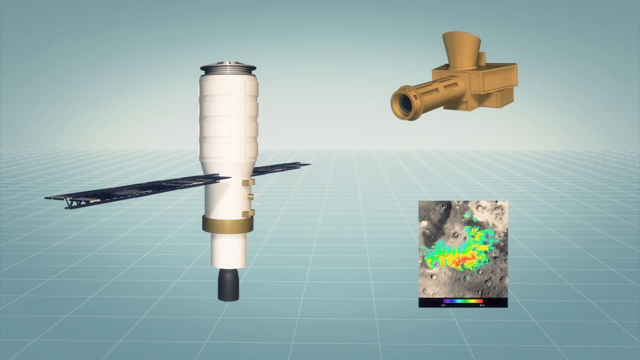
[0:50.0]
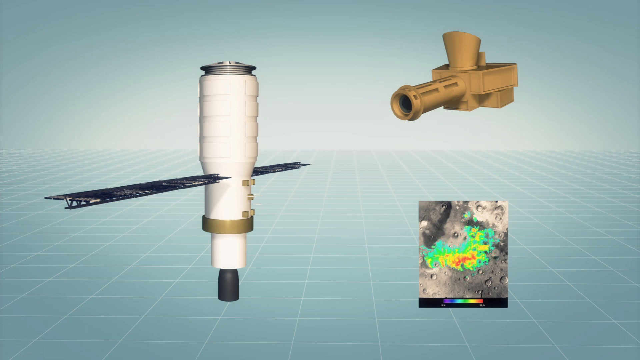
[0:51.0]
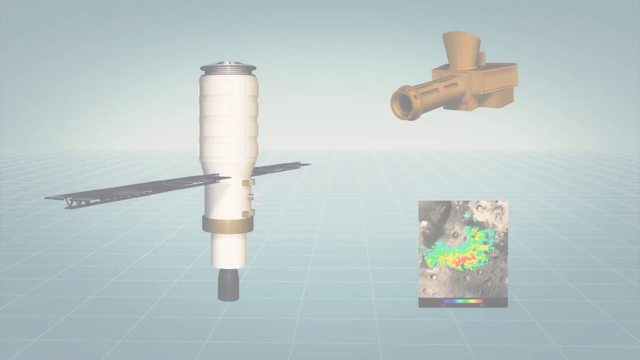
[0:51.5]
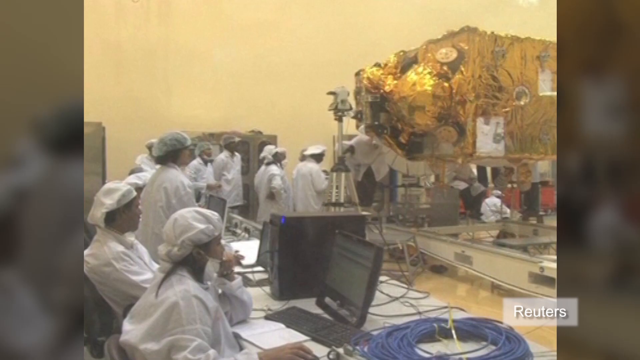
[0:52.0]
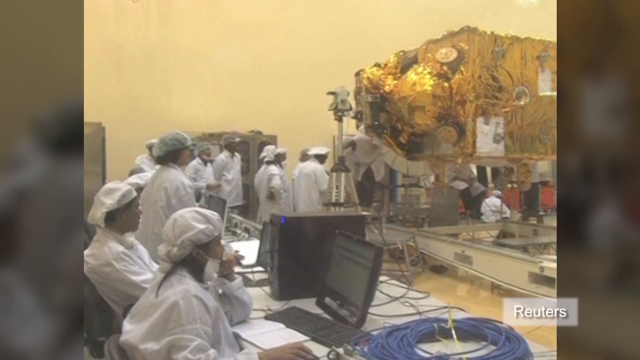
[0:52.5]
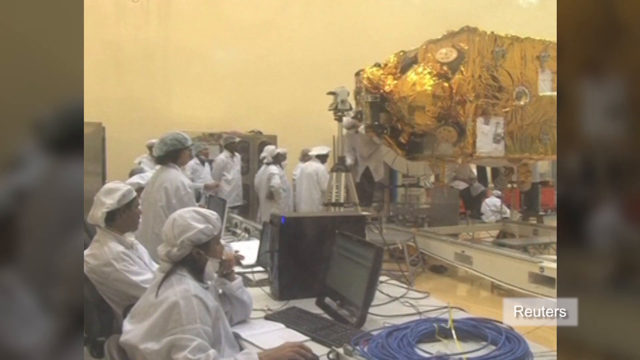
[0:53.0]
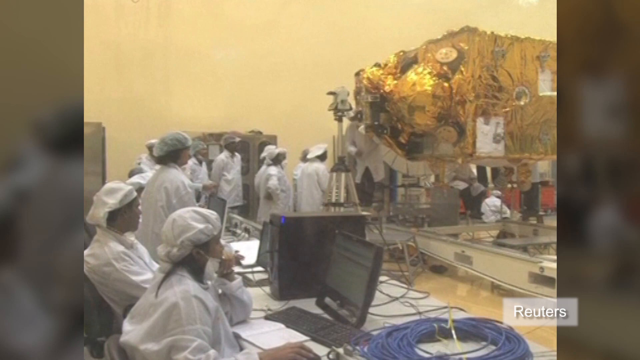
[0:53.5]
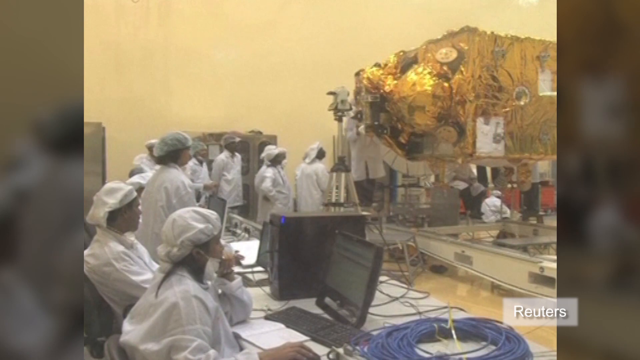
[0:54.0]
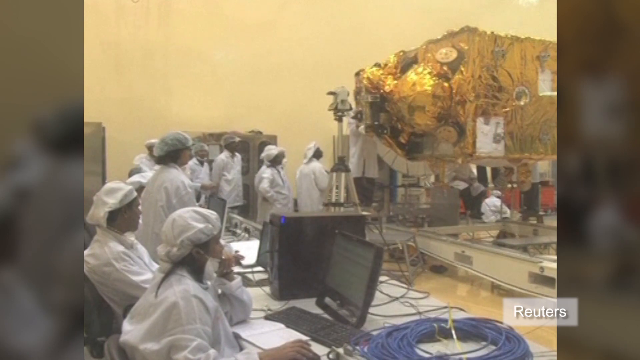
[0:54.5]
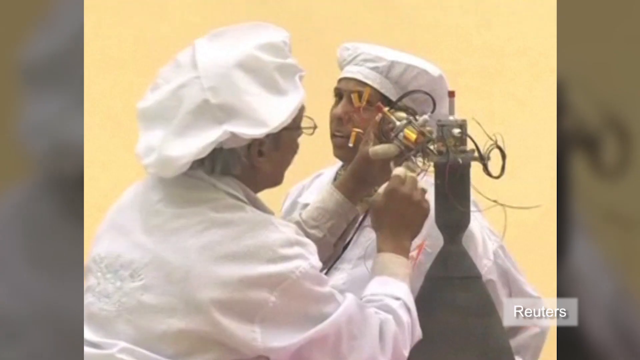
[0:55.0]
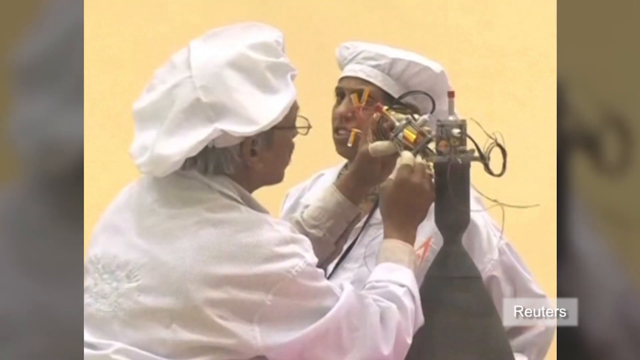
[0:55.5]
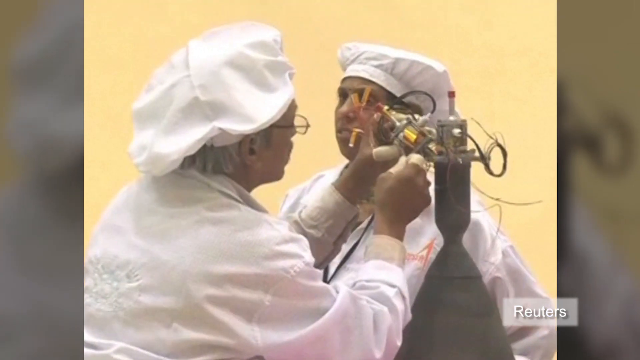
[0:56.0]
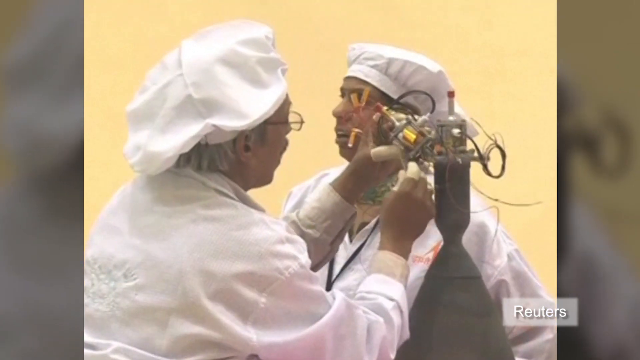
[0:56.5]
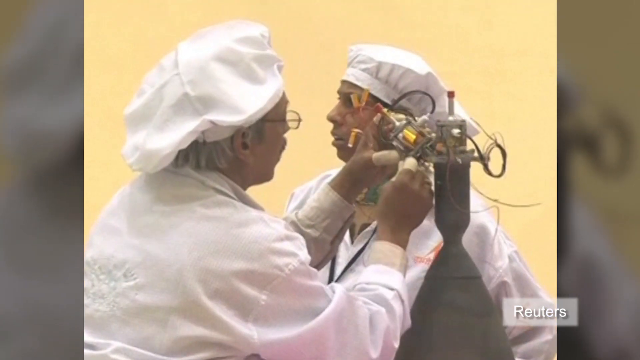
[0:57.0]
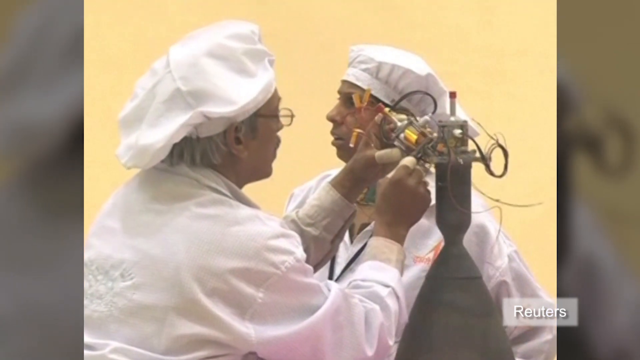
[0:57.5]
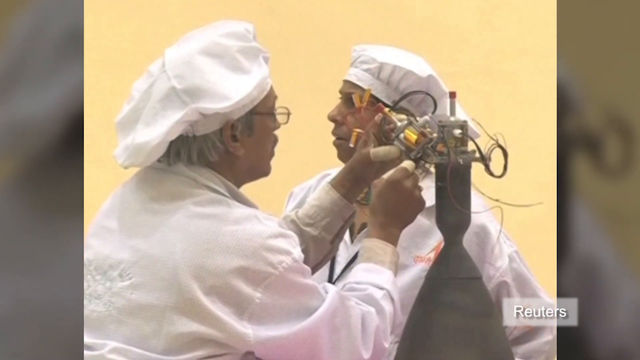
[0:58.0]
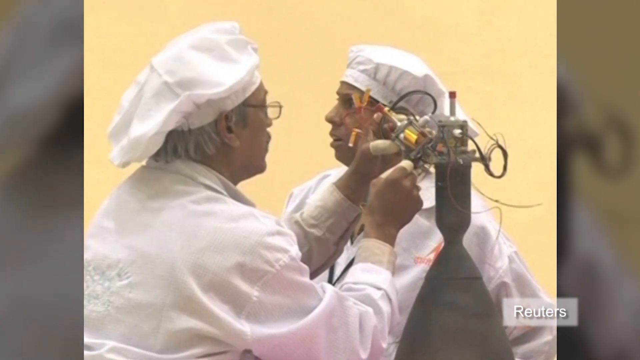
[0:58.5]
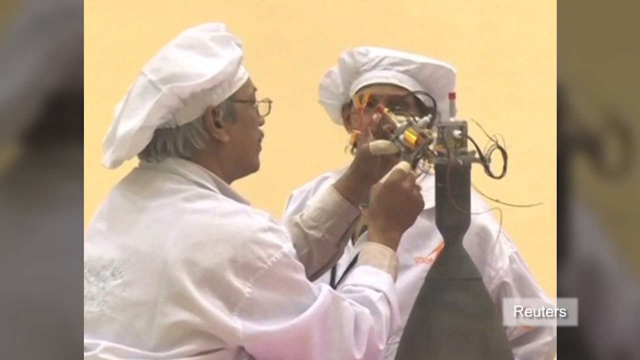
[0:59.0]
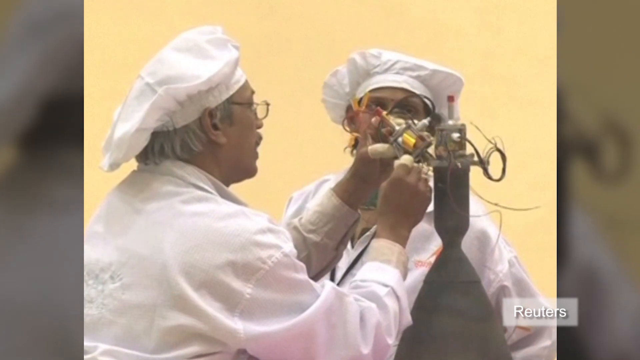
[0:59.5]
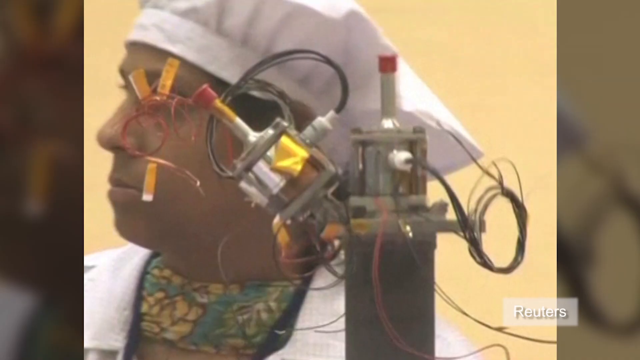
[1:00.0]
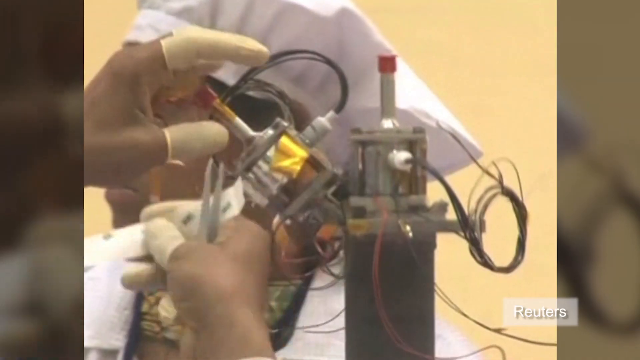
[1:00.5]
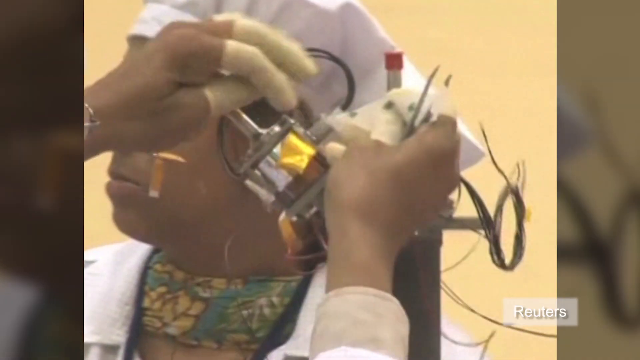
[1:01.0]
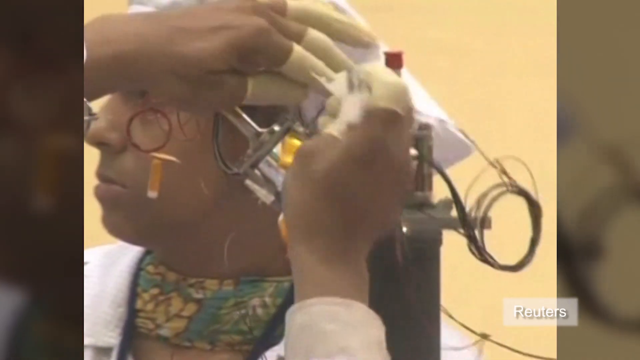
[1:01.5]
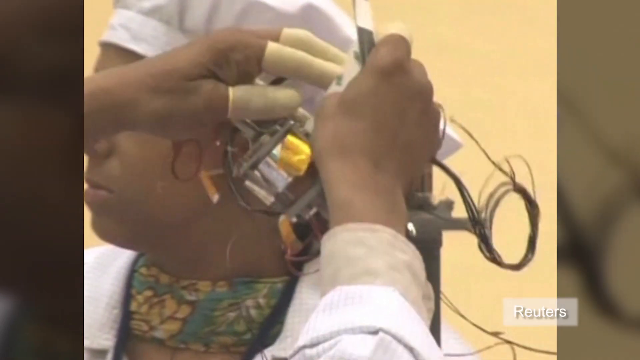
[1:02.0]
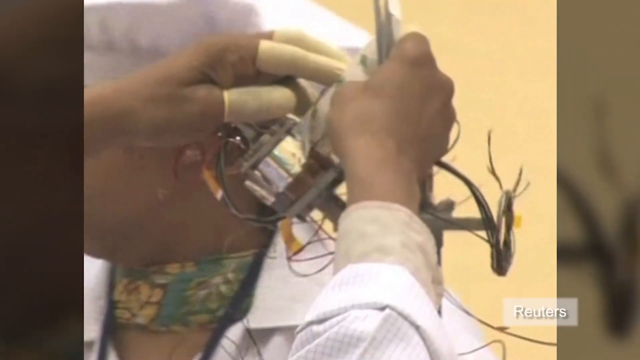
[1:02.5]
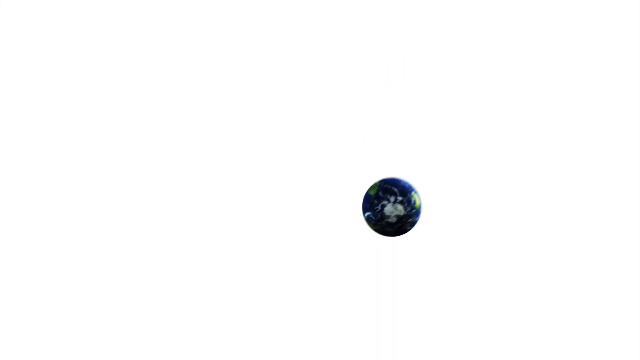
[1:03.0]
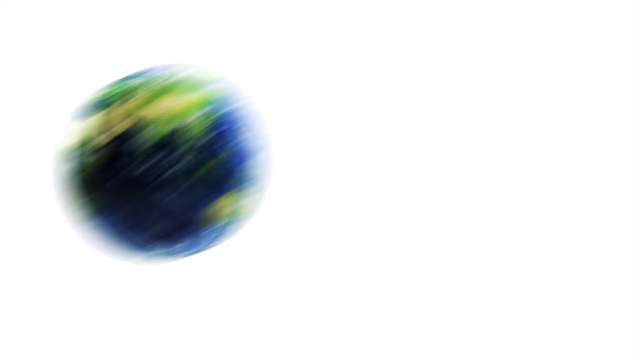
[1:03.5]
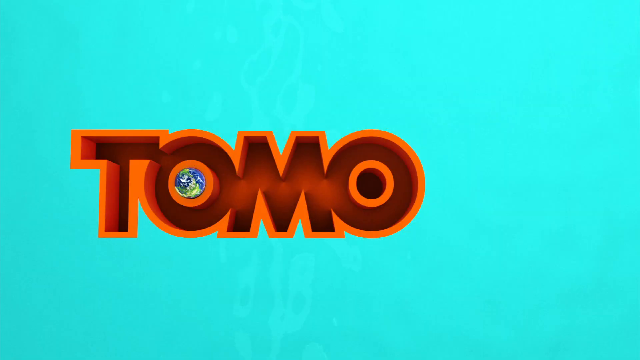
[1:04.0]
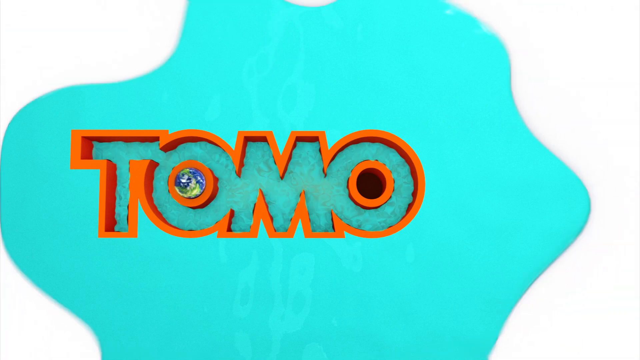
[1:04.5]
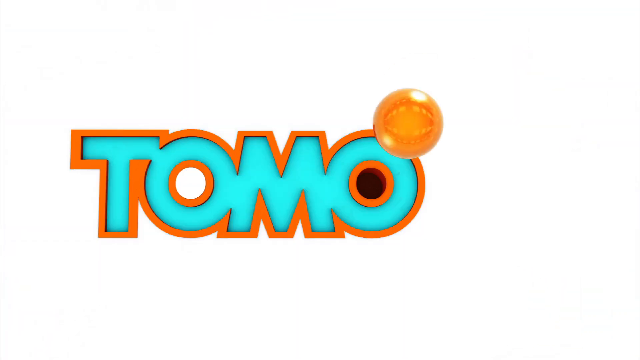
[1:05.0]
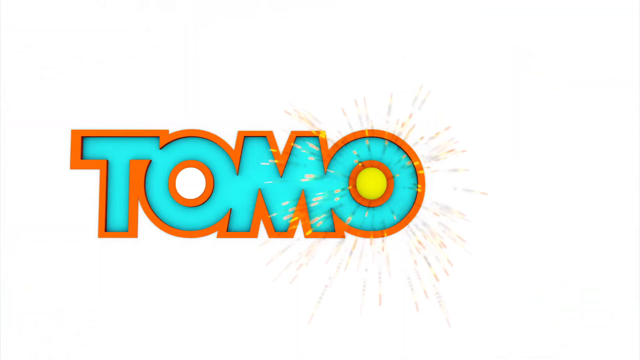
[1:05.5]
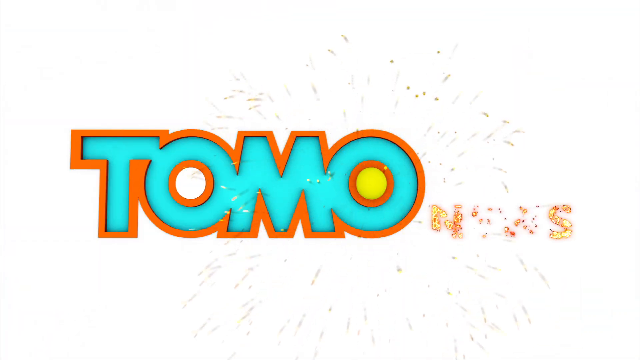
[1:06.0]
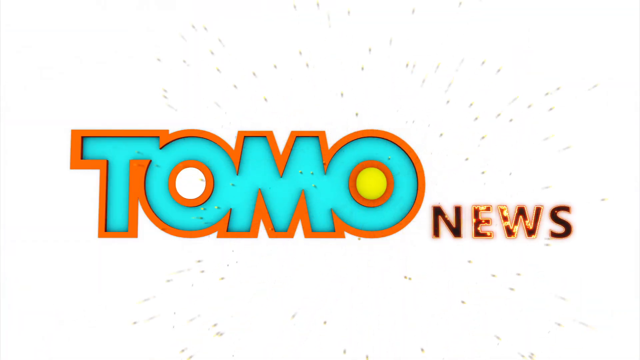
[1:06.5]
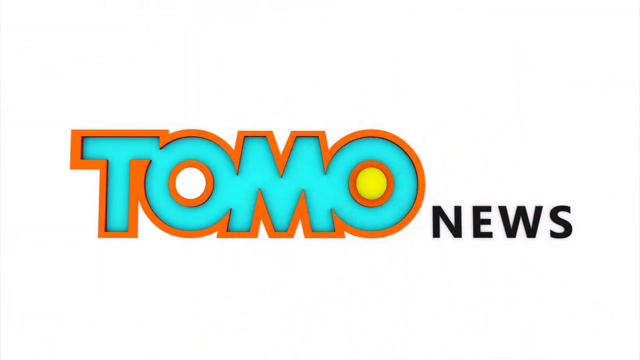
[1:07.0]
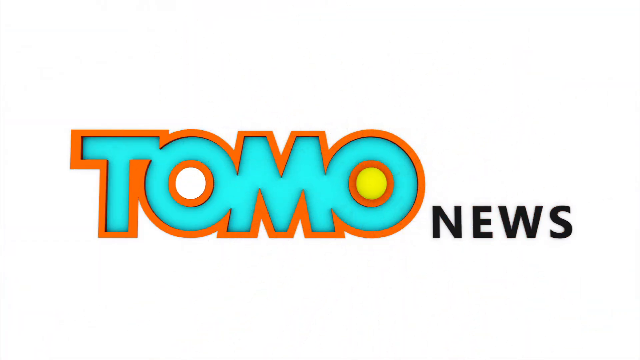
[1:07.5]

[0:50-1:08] Three different pictures are on screen. At the top right is some kind of brown module with a spot at the top that almost funnels, flaring out a little as it goes up; a scope on its front part comes out pretty far, almost like an open connecting piece for a garden hose, and there are a few slits on its side. Below that is a black-and-white aerial shot of the surface of the planet, with a few colors in the middle, and a meter chart at the bottom running from purple and blue through light blue, greens and yellows to reds from left to right. The satellite sits perpendicular to the grid on a small black base, and everything on its body is white. Then the gold, tinfoil-like object appears, a cube with gold-colored foil that looks like part of the spacecraft. A bunch of people in white lab coats are around it; some sit at a computer and some stand close to it, and a couple of people examine it up close. A woman closest to the camera has her arm up on the table while looking at a computer, and a tower with a blue light on is in between. Apparently only two people are sitting, closest to the camera, while everyone else is kind of standing around the object, which is up in the air a little, sitting on something. There is also some kind of metal shaft, maybe a machine that takes pictures of the object. A man with glasses tinkers with this machine using his fingers, wearing tight brown latex fingertip gloves; the people look like they wear chef hats with their white coats. Another man looks off, not paying attention, then looks back. In a closer shot, the man appears to be putting some kind of foil piece over the device. Then an animated Earth comes out of nowhere, swoops down and around, and becomes part of the word "Tomo" (T-O-M-O), going into the first O. It flashes into a yellow thing that jumps down into the other O and splashes, with what looks like confetti everywhere, and "Tomo news" appears on a white background at the end.